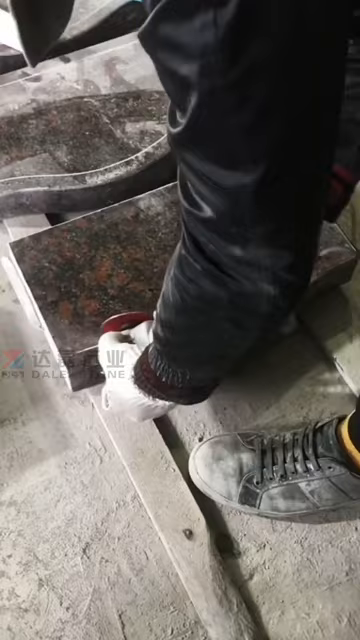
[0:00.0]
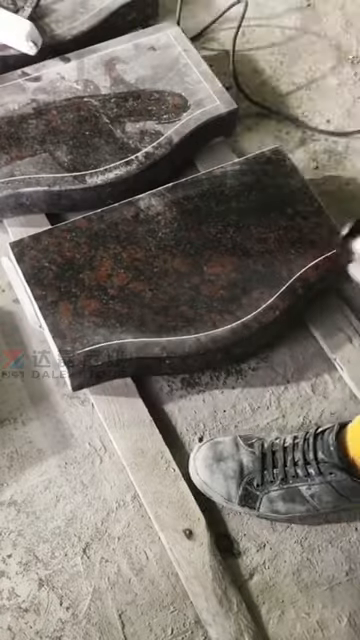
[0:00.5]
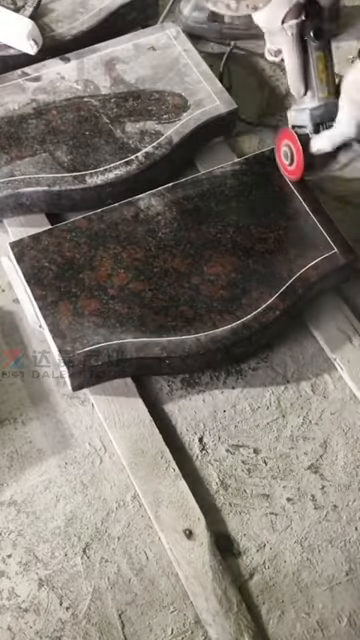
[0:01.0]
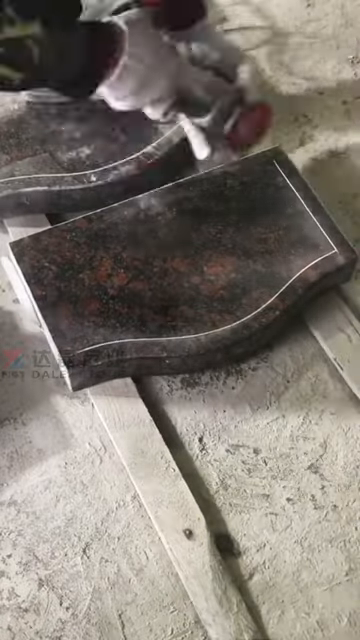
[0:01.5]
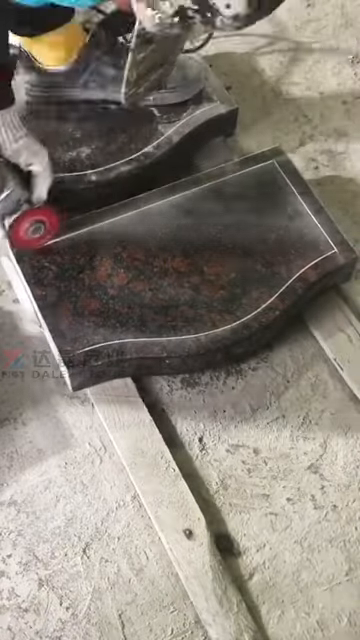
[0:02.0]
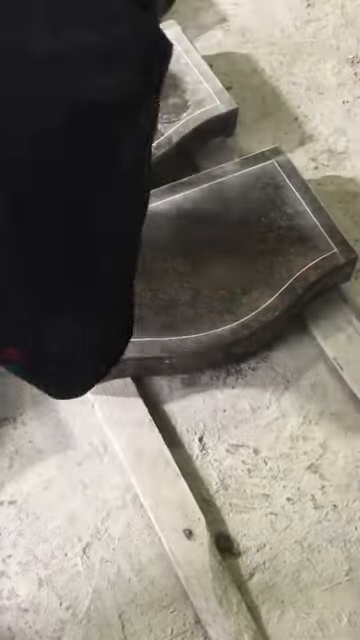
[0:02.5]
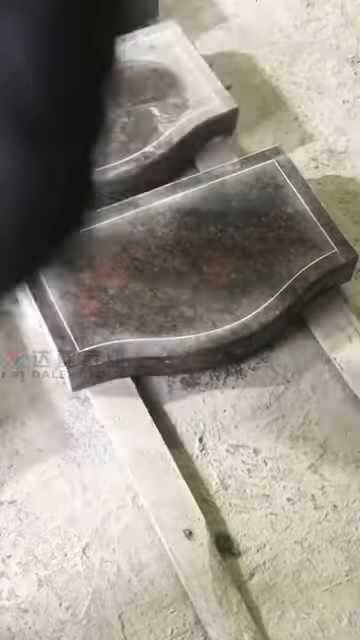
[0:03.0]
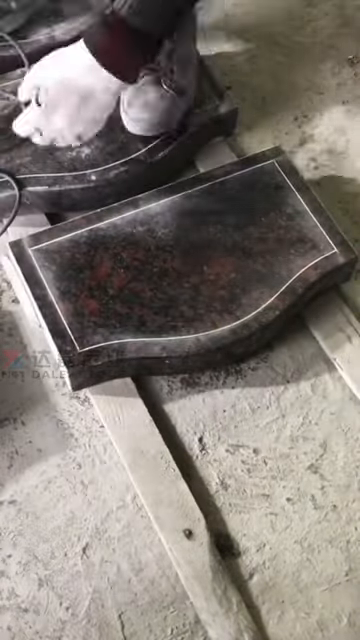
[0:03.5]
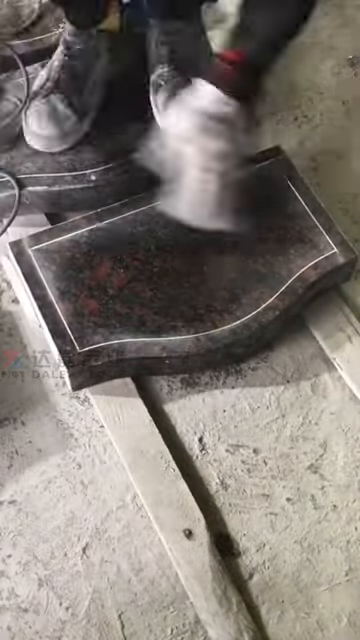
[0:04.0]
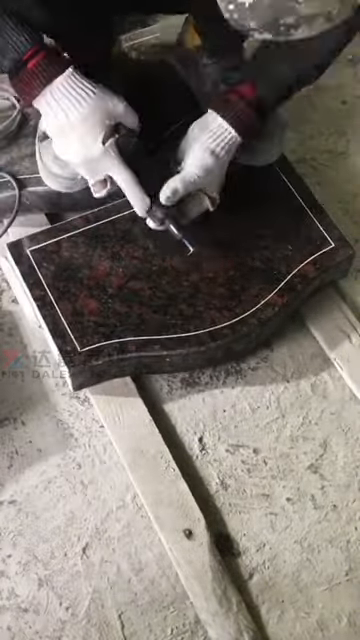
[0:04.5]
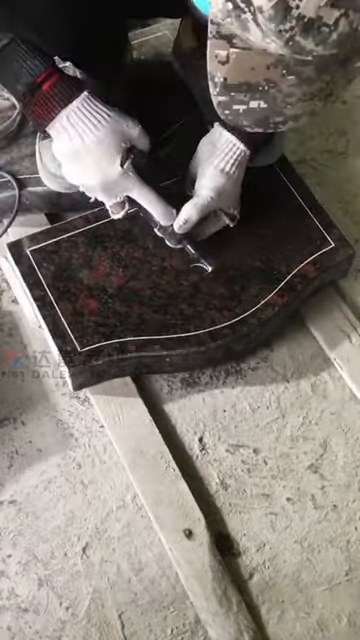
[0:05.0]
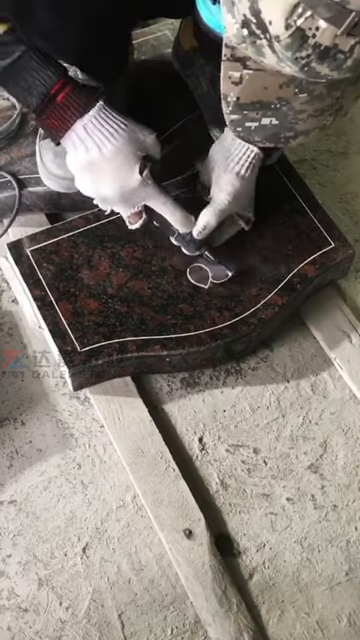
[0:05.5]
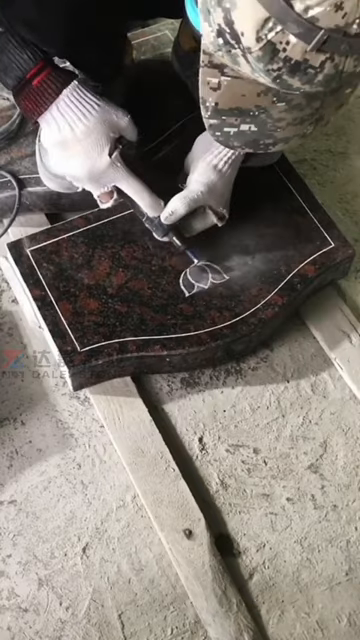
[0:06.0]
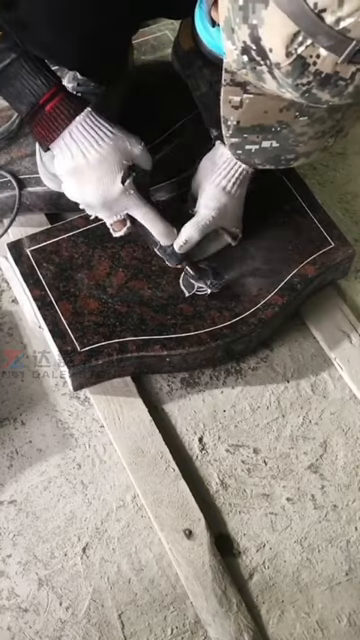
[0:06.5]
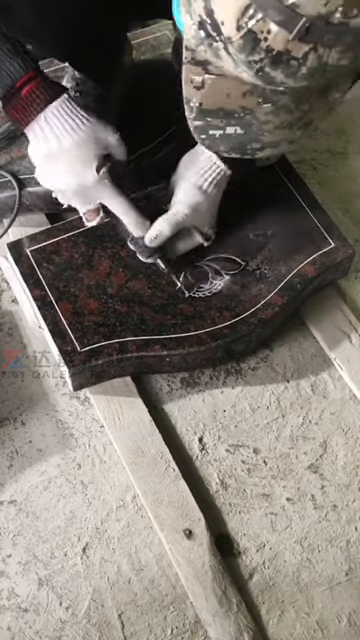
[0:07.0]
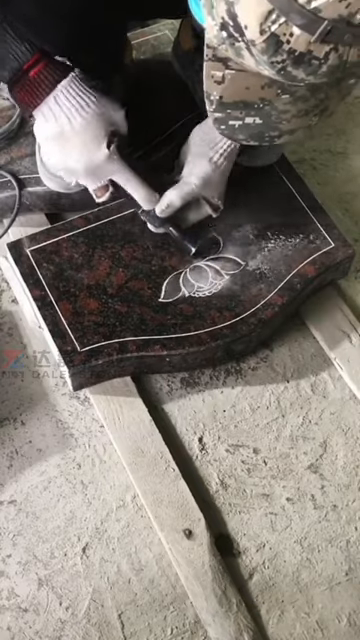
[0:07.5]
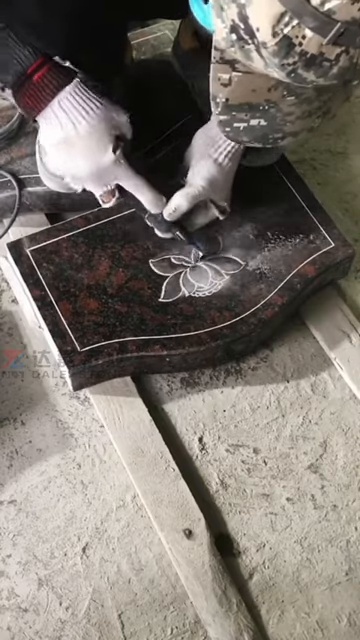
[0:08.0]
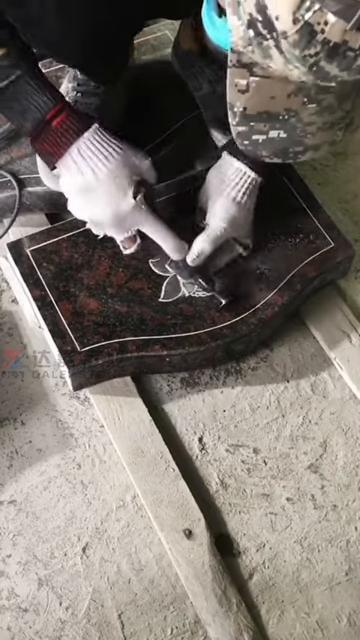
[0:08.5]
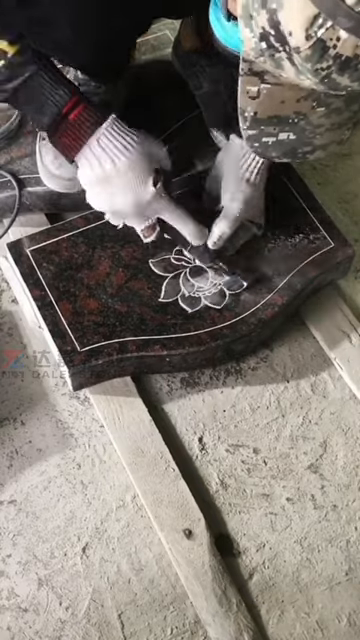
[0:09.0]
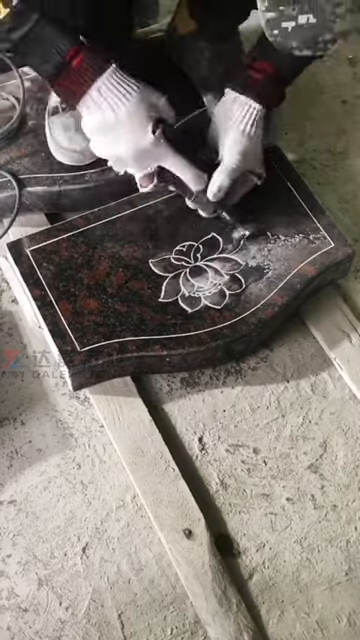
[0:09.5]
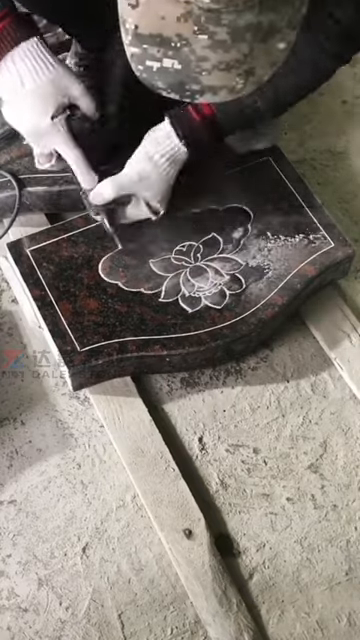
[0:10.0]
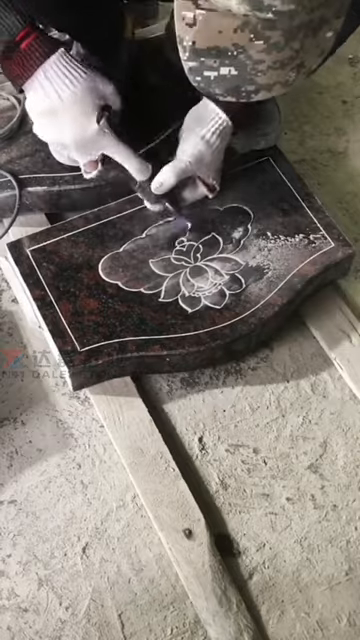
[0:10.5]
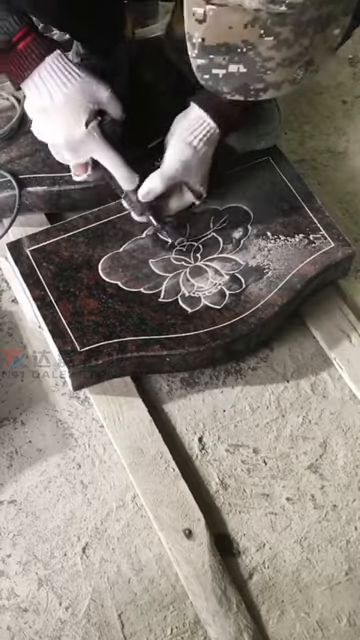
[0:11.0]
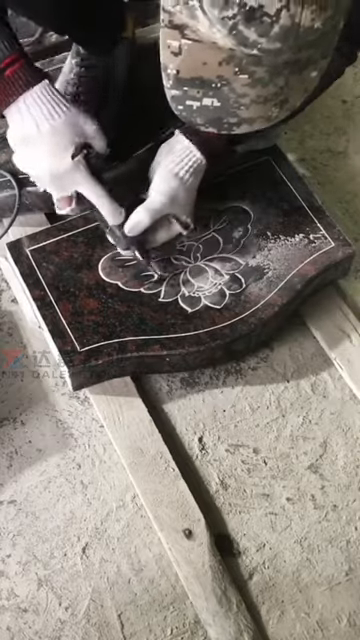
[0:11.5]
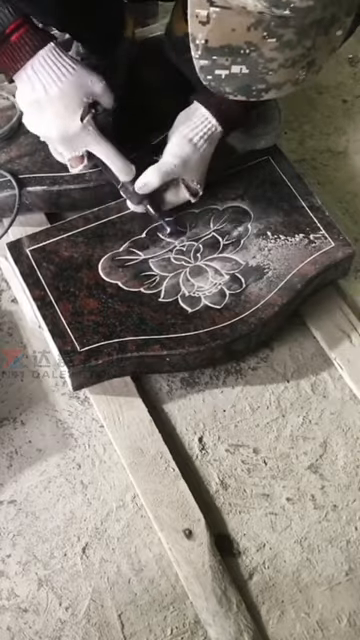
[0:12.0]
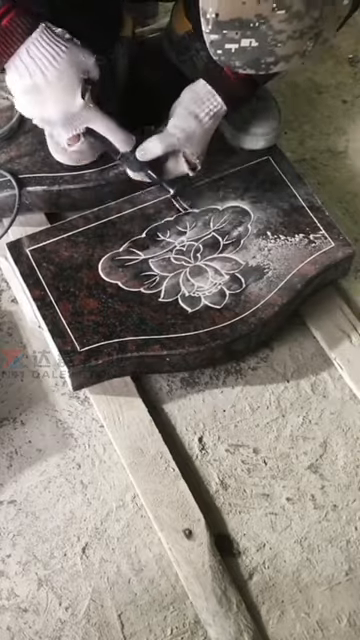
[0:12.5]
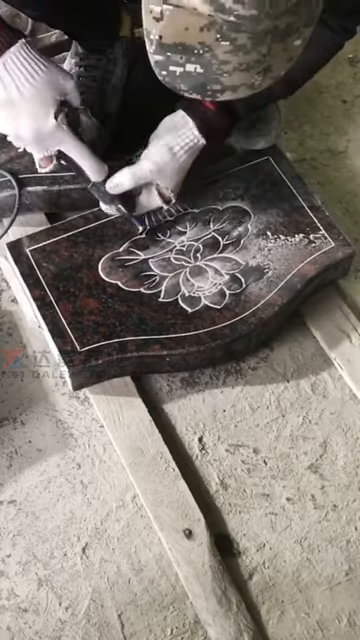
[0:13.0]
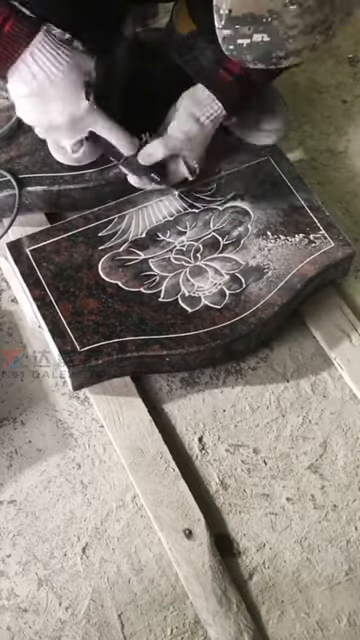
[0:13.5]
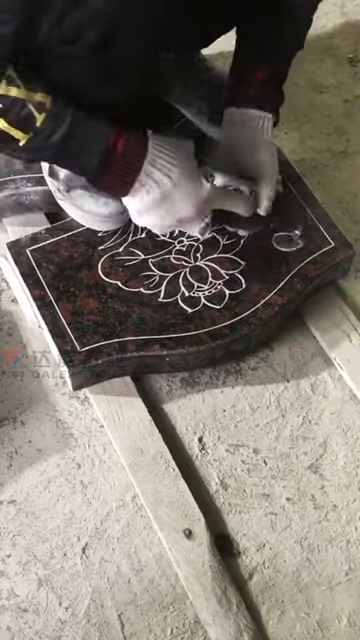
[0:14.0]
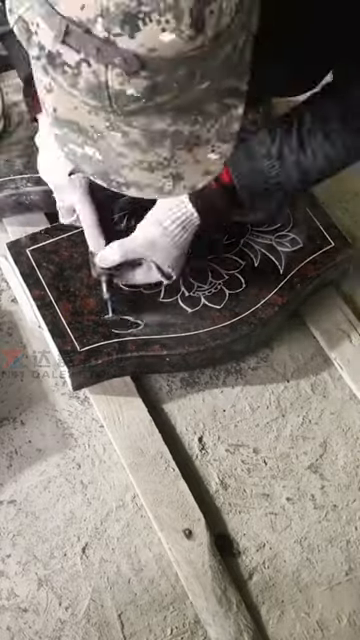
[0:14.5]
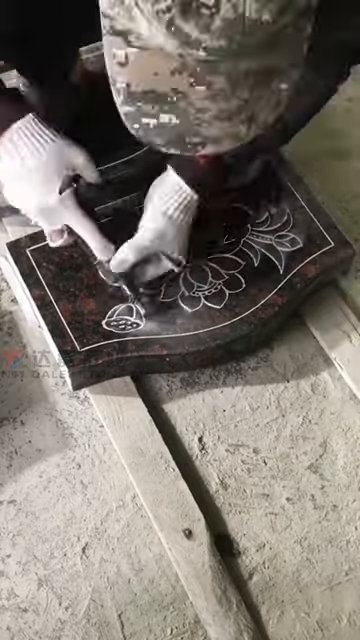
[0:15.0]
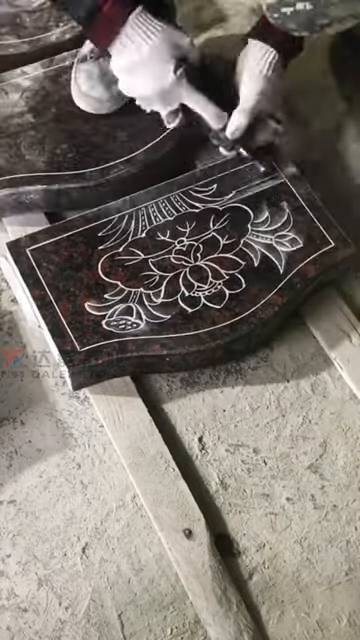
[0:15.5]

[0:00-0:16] A person works on what appears to be a tombstone, possibly made of some type of granite, crafting a huge, fairly detailed flower design on it. The flower image is white, and the tombstone looks black and brick red. The person wears white gloves, a mask, black shoes or boots, and a camouflage hat. They appear to be inside a building.